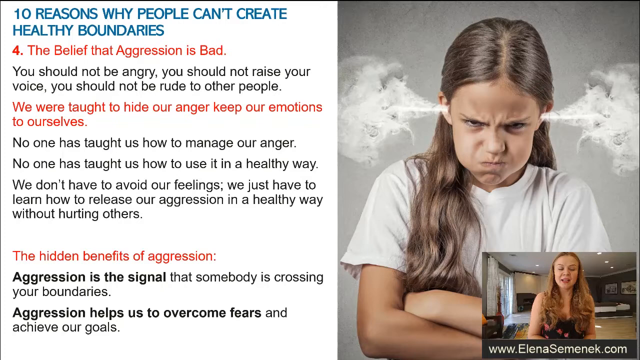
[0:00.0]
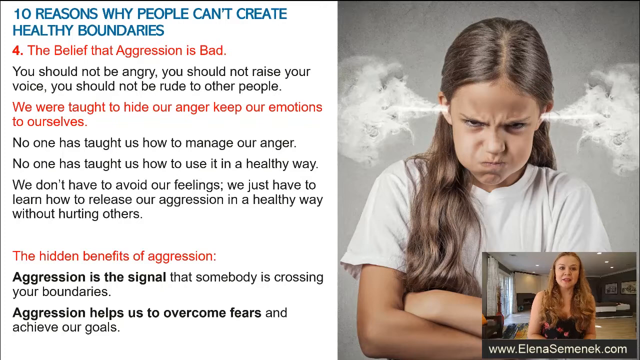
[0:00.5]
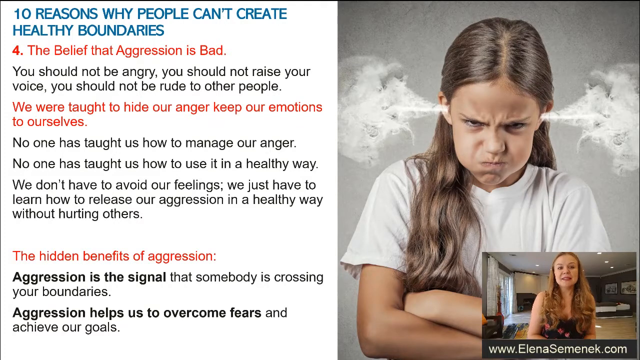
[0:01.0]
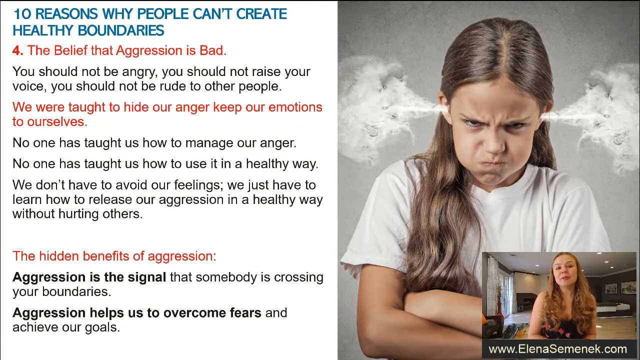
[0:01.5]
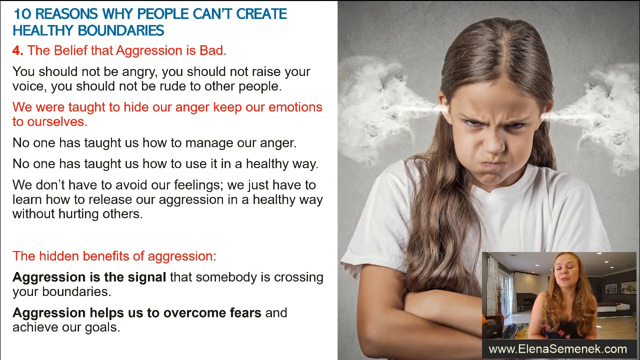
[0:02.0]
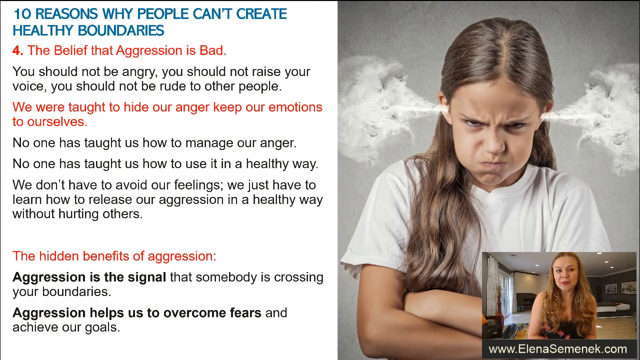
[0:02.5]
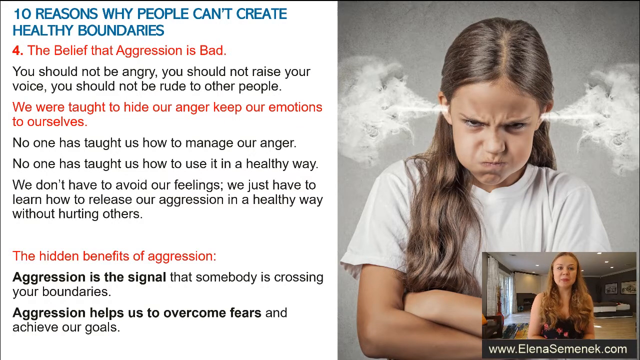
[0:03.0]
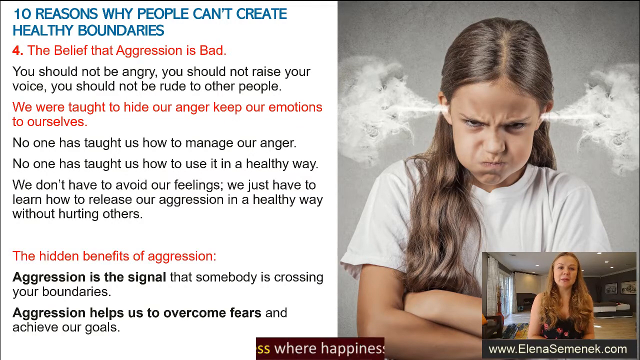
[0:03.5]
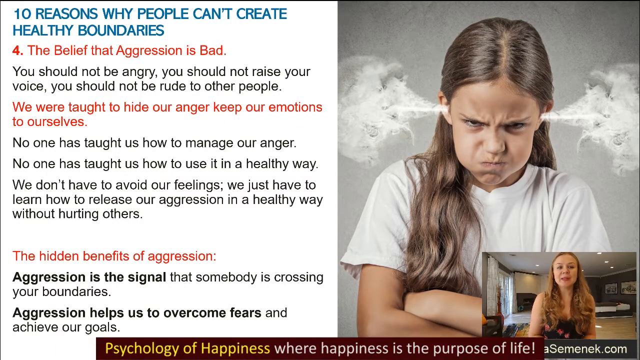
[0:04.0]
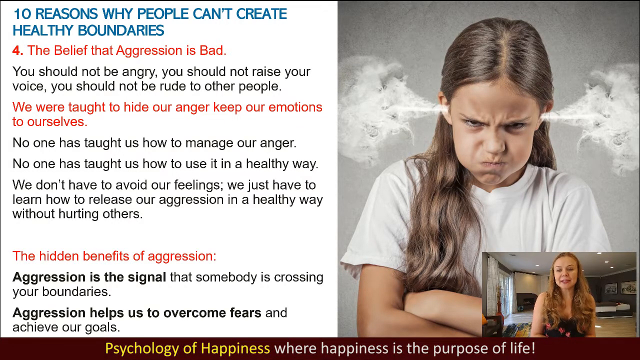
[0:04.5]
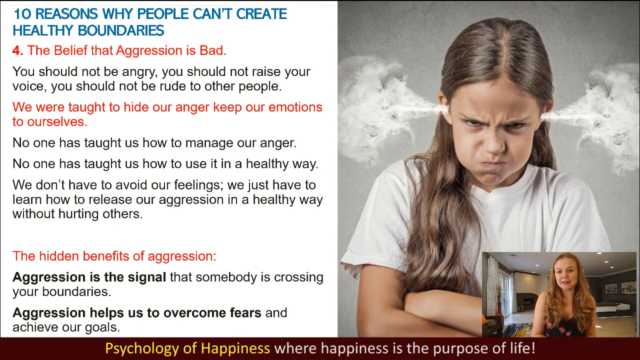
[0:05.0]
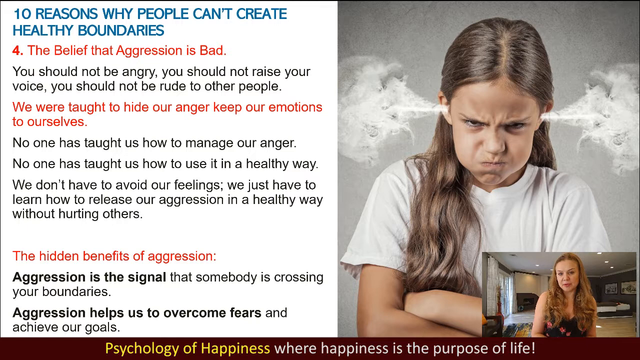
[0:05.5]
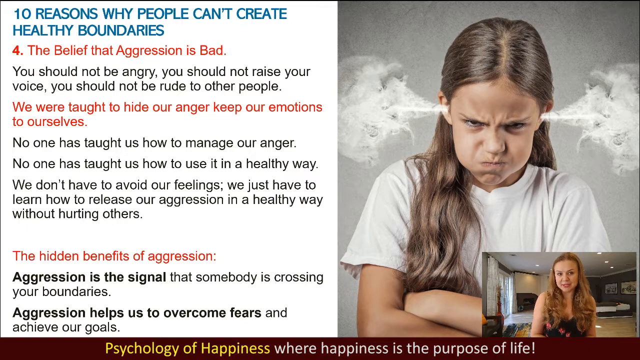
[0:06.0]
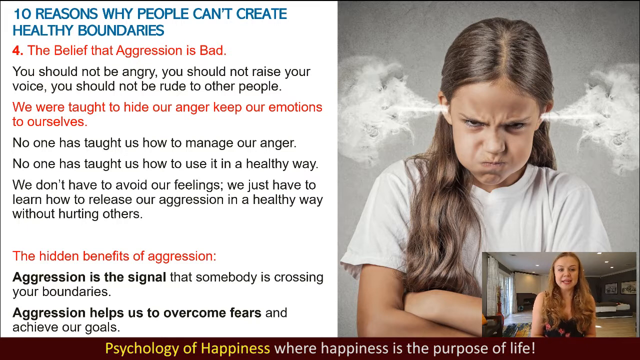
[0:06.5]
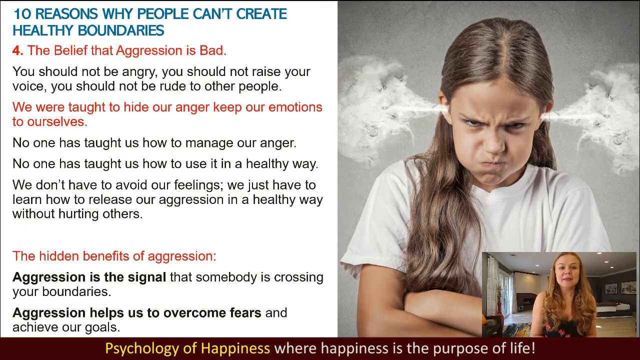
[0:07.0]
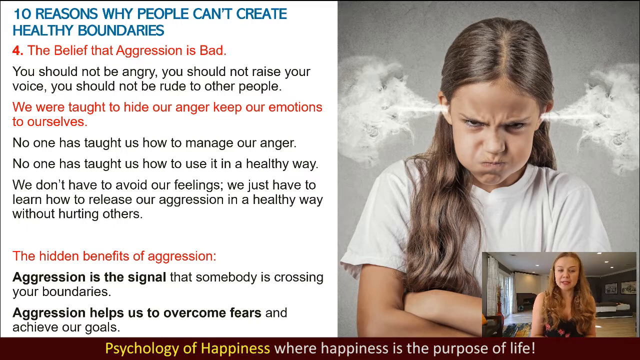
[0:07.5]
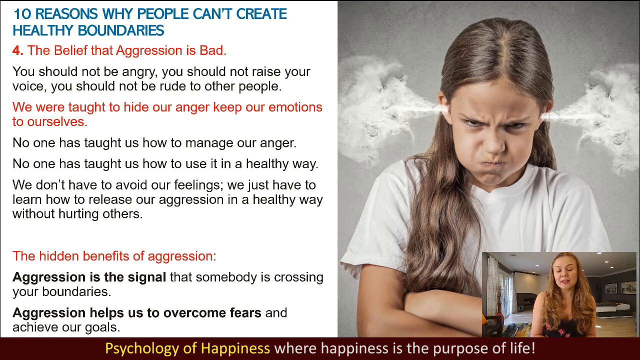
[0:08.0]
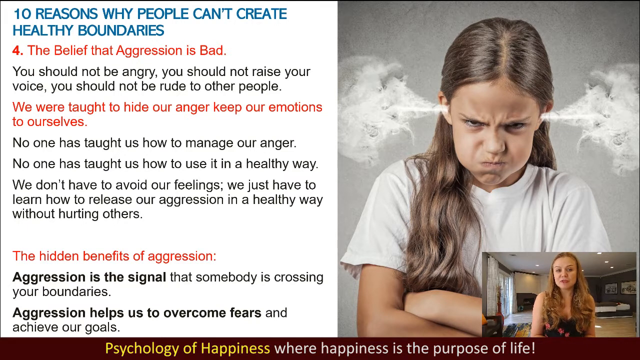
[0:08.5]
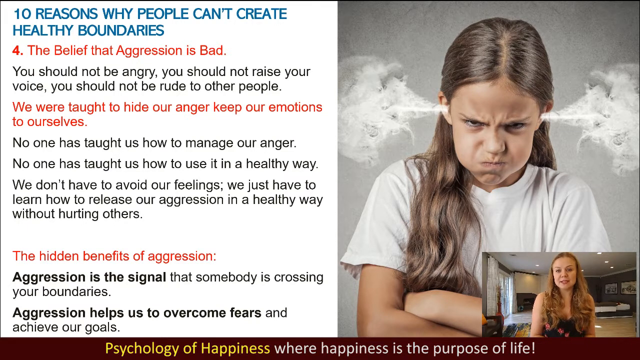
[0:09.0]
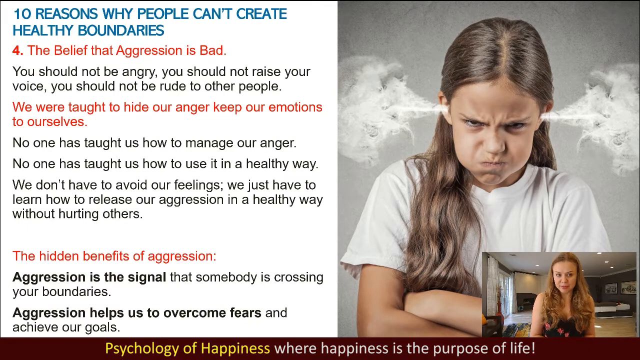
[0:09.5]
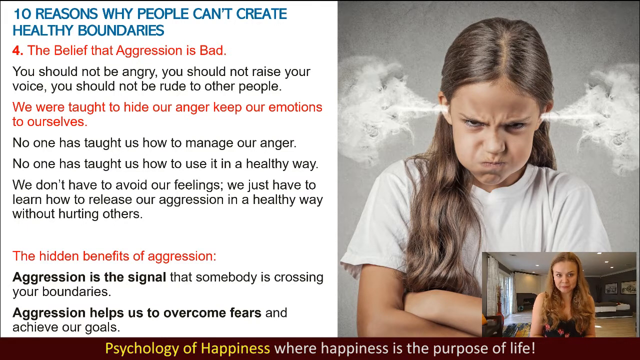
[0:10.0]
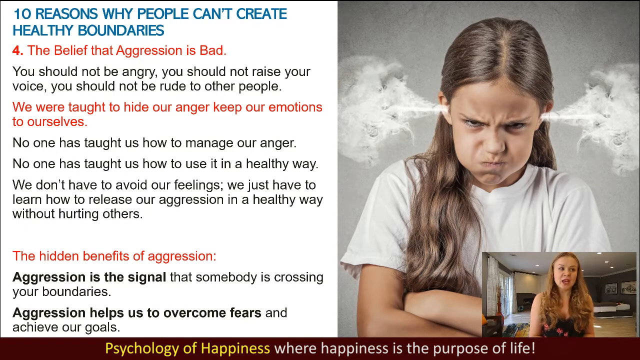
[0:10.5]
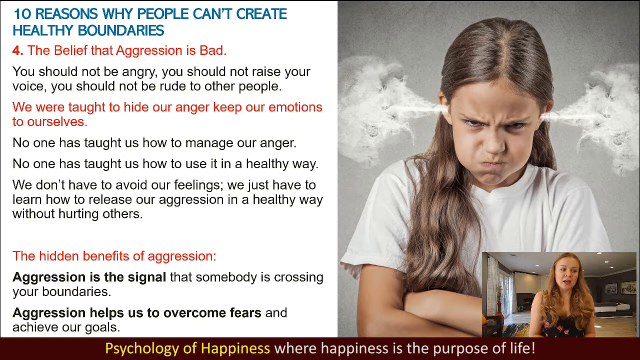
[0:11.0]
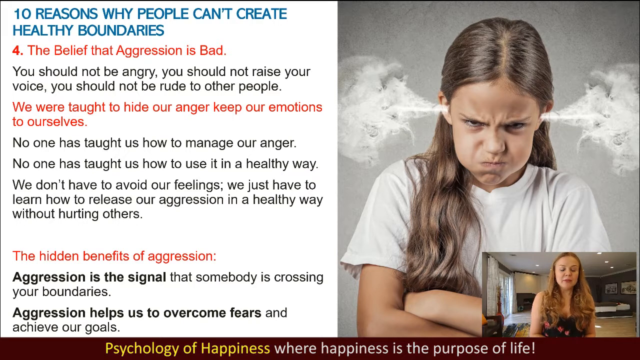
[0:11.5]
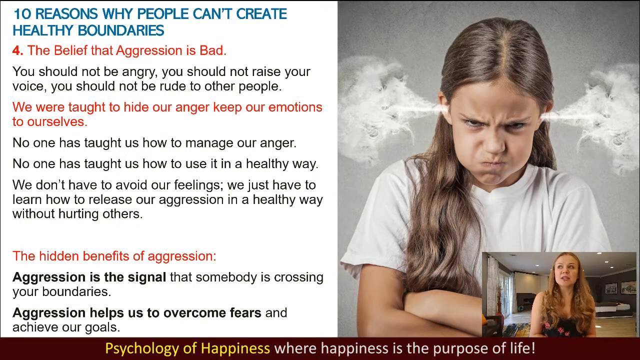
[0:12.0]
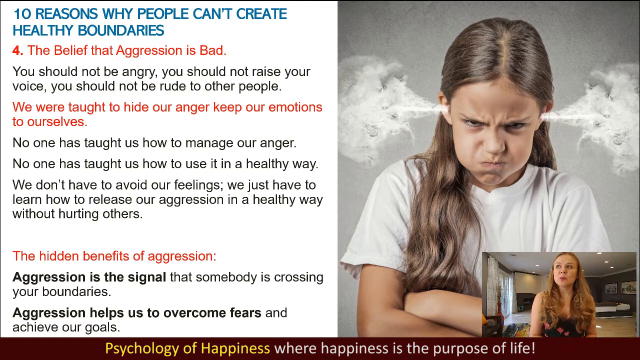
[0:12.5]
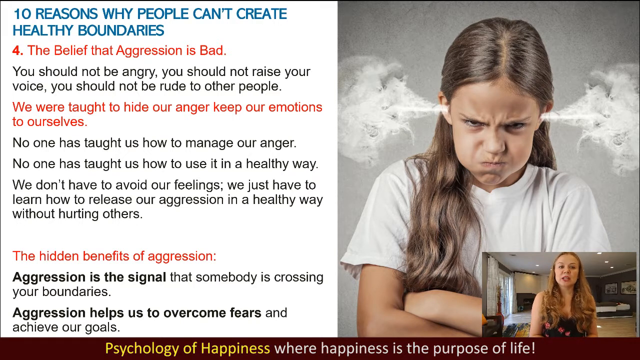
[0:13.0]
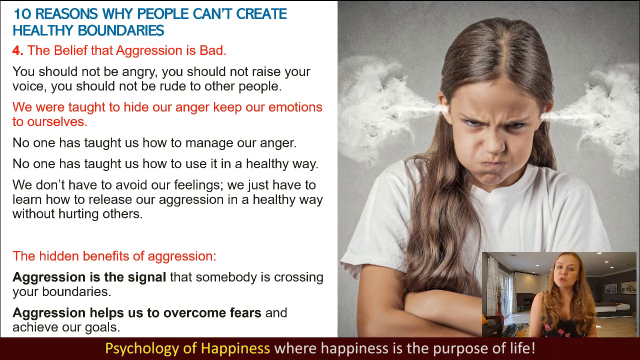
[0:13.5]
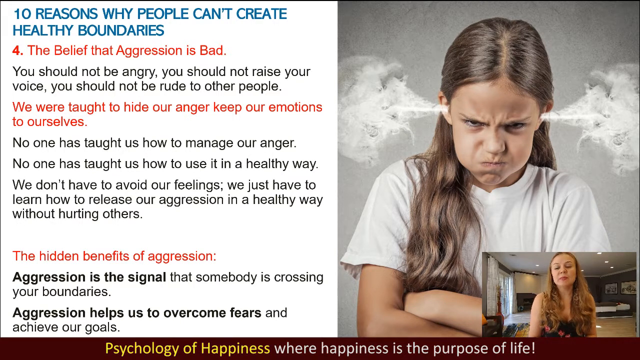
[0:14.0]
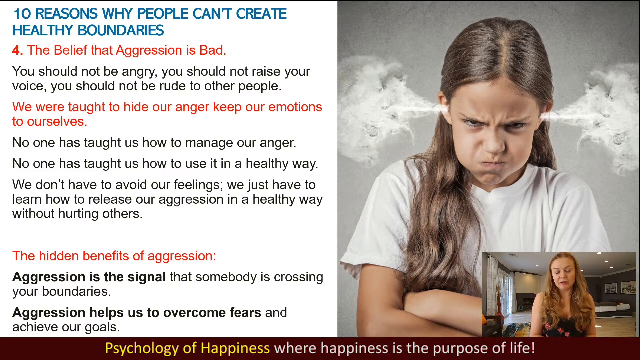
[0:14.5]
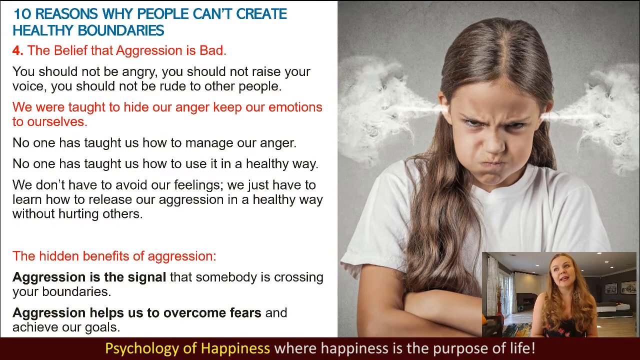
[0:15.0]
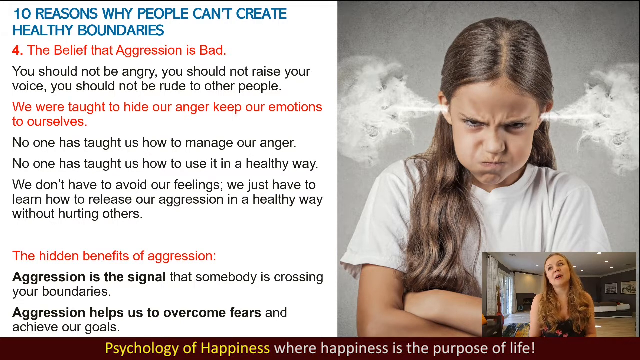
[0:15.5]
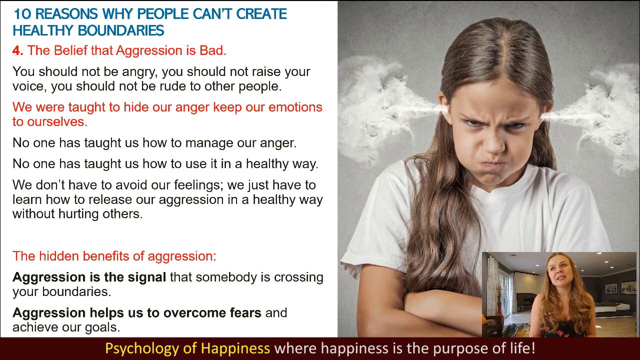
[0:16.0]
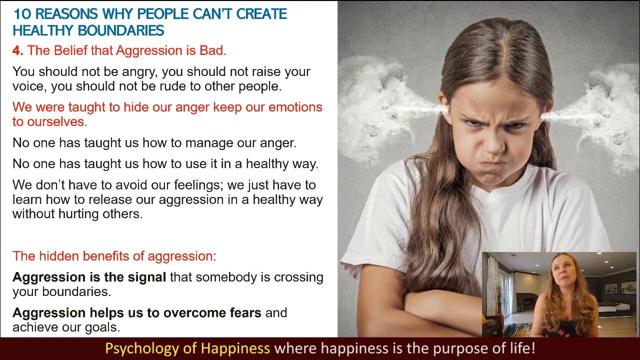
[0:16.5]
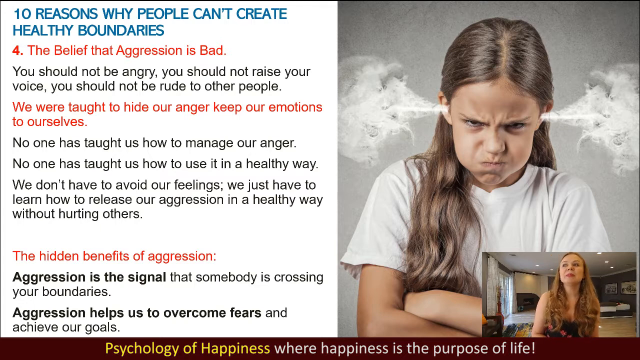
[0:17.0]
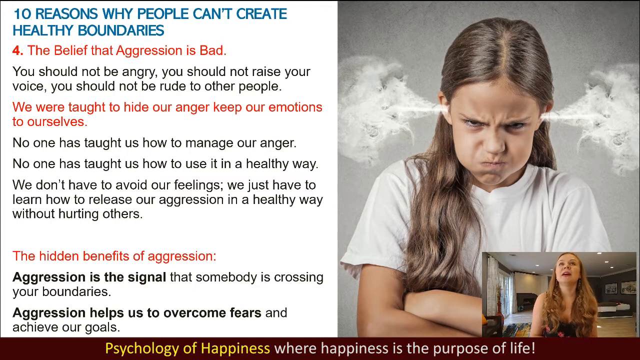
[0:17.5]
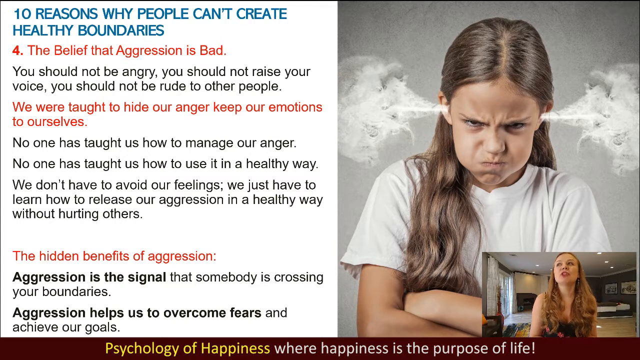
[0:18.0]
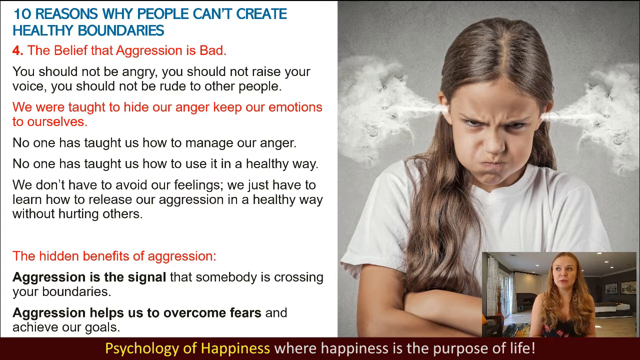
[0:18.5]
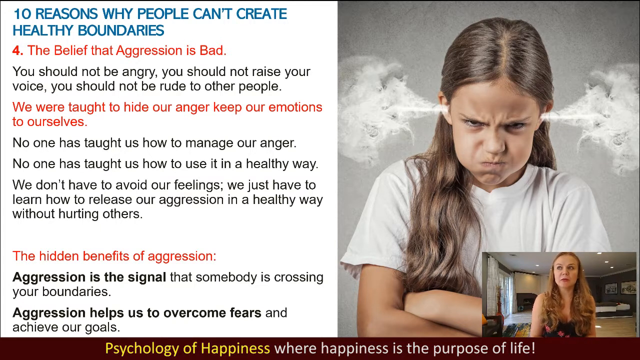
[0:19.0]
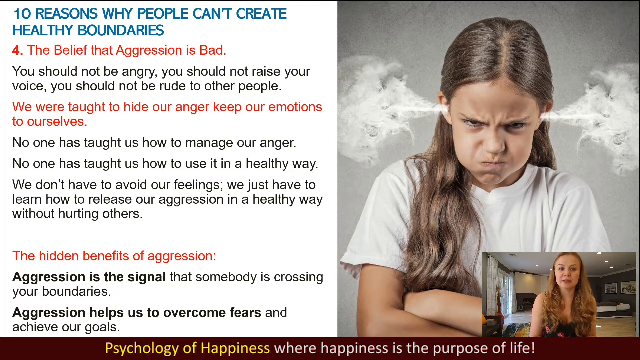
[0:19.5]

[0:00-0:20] The screen is divided roughly into two halves. On the left-hand side is a page of text with the heading "10 reasons why people can't create healthy boundaries." The text beneath has a heading "4 The Belief that Aggression is Bad". It mentions the idea that you shouldn't be angry or raise your voice, and states in red that we were taught to hide our anger and keep our emotions to ourselves. There is also a heading about the hidden benefits of aggression. On the right side of the screen is an image of a girl, a child, who looks very angry: her arms are folded, she is frowning, and steam is coming out of her ears. She has her hair in pigtails and wears a white t-shirt. In the bottom right-hand corner a woman is speaking; she seems to be the host of the video and seems to be narrating it. She has long brown hair.